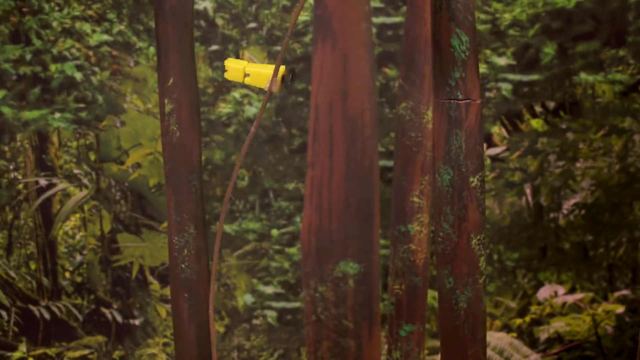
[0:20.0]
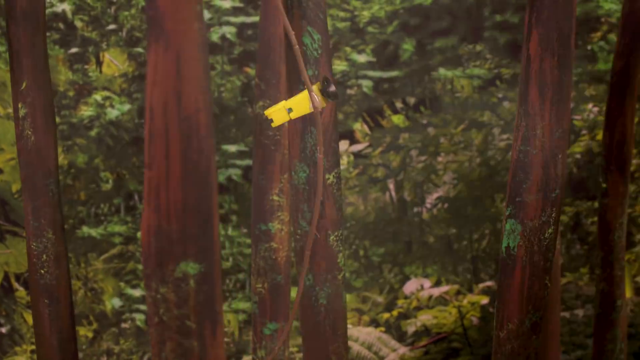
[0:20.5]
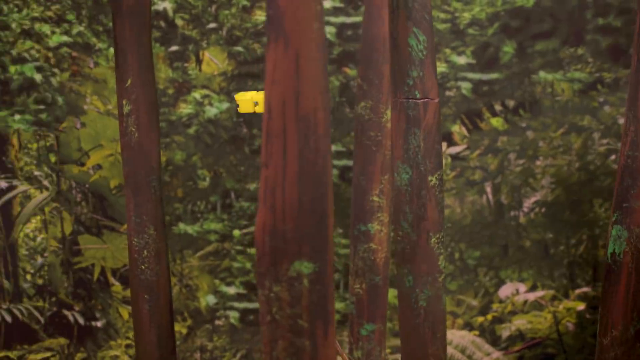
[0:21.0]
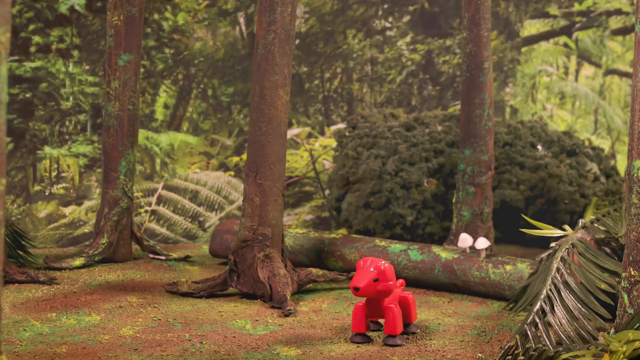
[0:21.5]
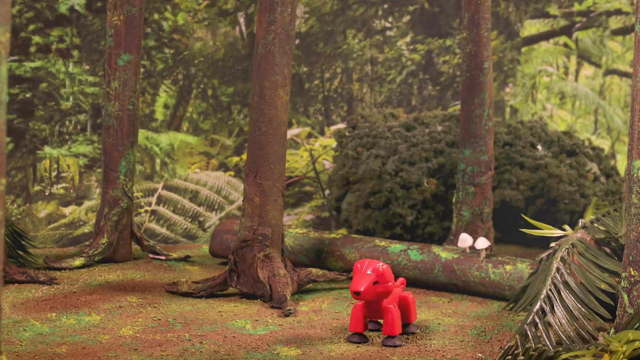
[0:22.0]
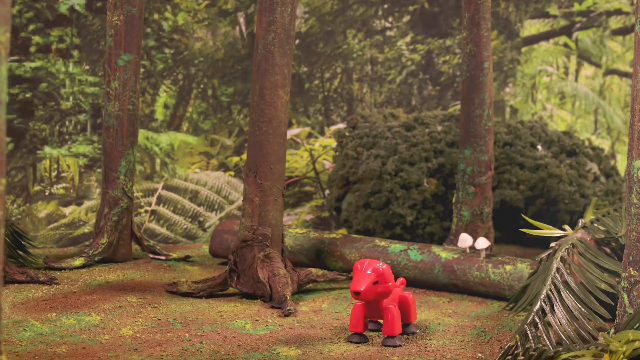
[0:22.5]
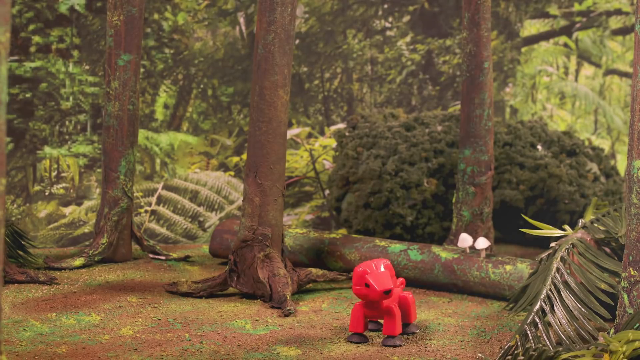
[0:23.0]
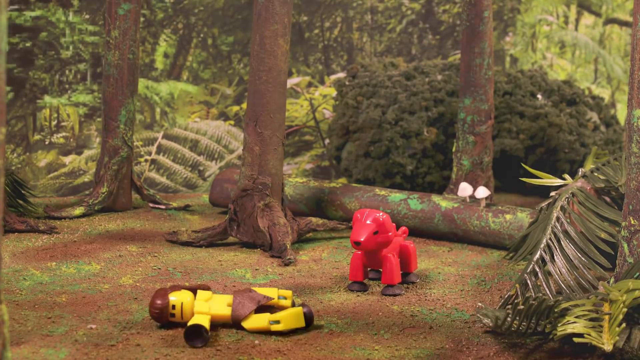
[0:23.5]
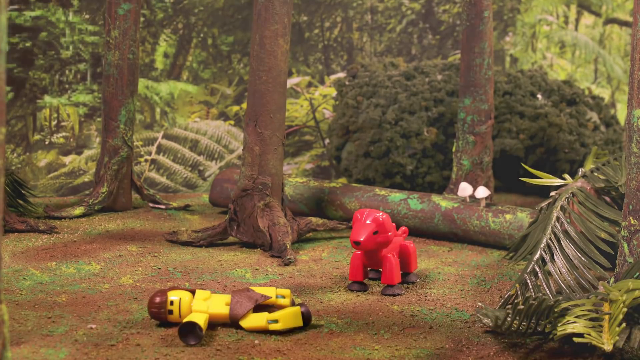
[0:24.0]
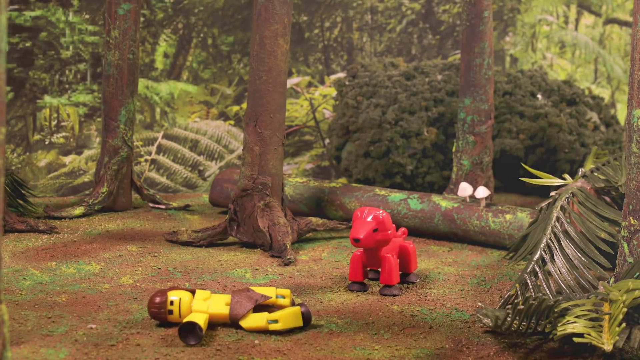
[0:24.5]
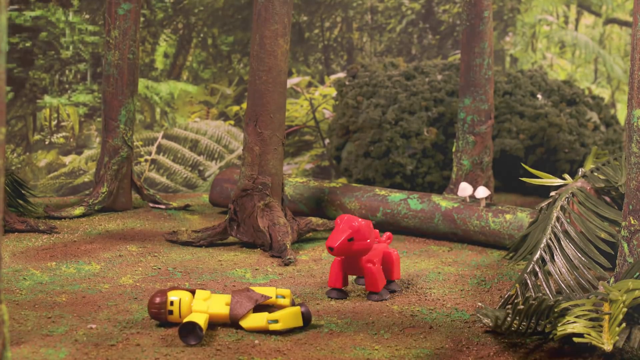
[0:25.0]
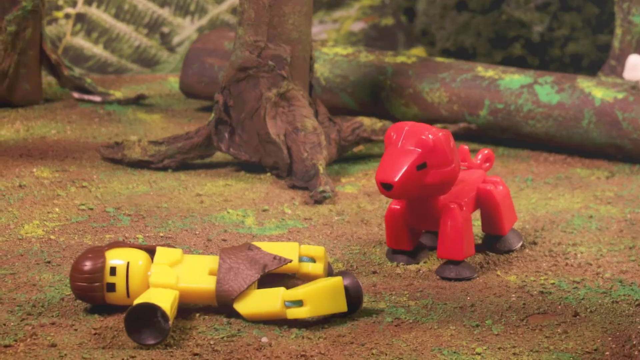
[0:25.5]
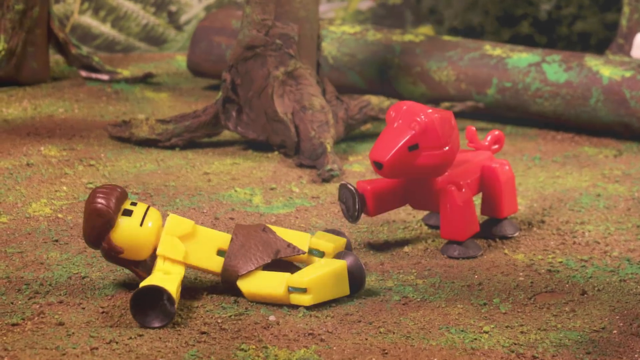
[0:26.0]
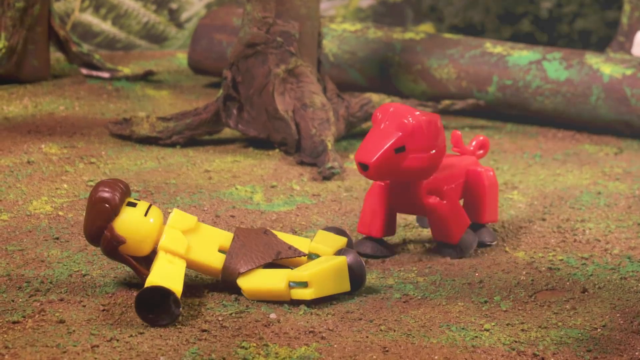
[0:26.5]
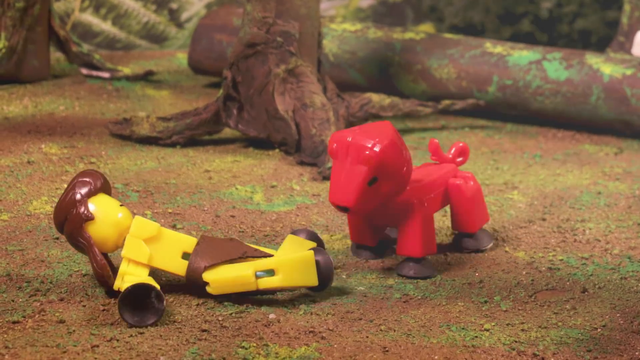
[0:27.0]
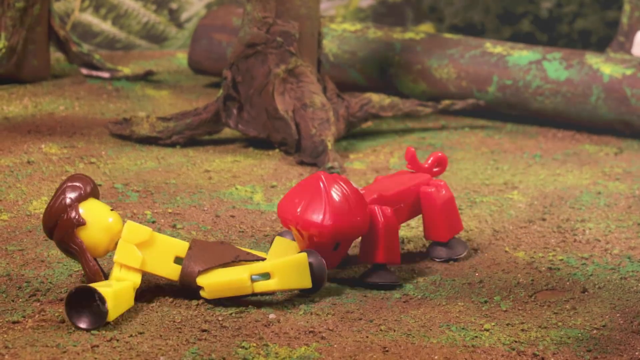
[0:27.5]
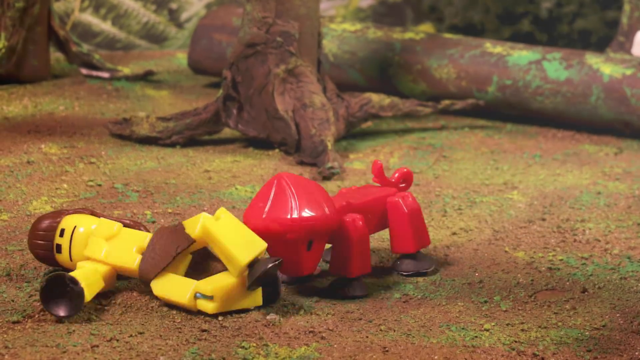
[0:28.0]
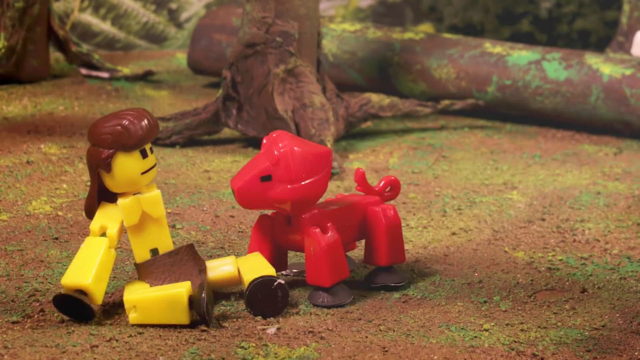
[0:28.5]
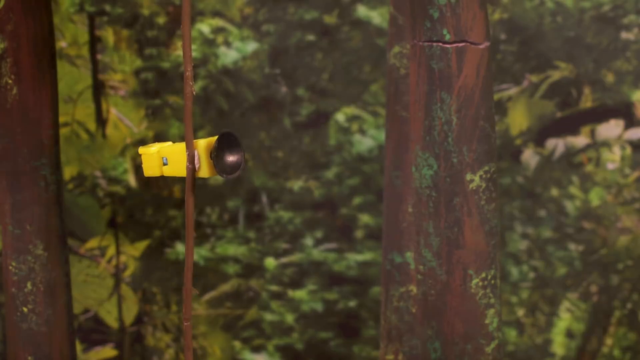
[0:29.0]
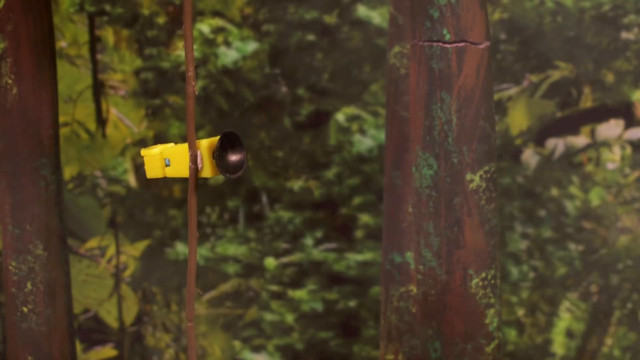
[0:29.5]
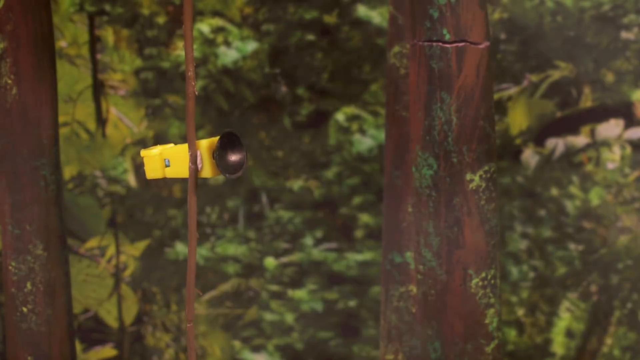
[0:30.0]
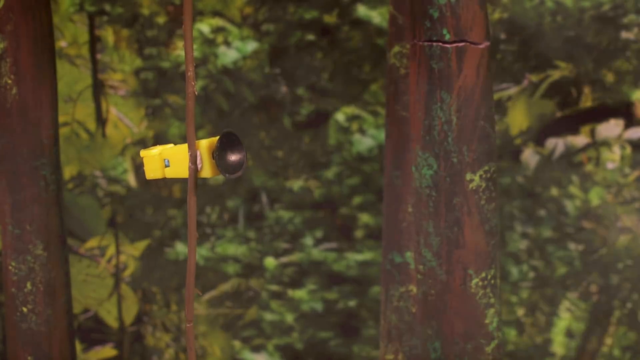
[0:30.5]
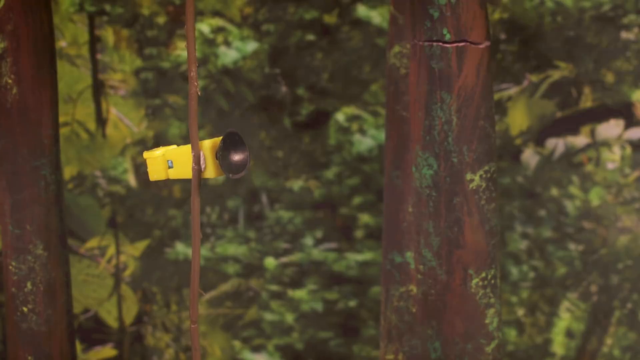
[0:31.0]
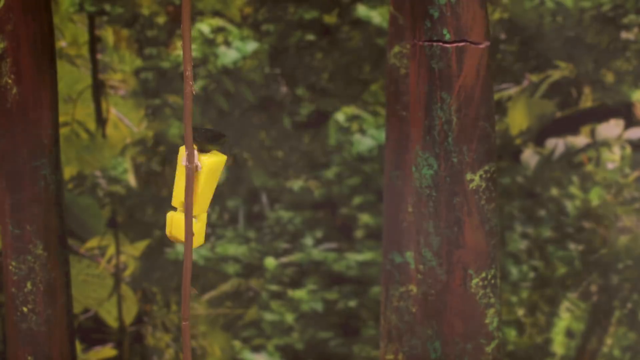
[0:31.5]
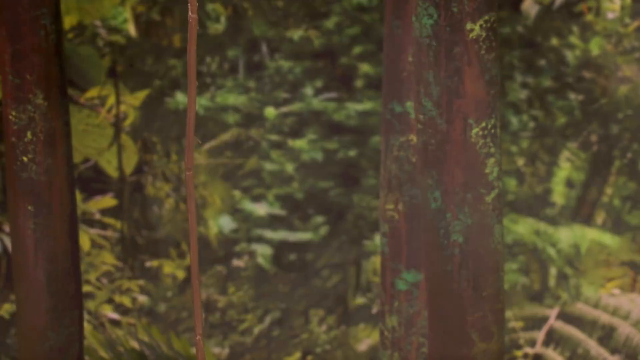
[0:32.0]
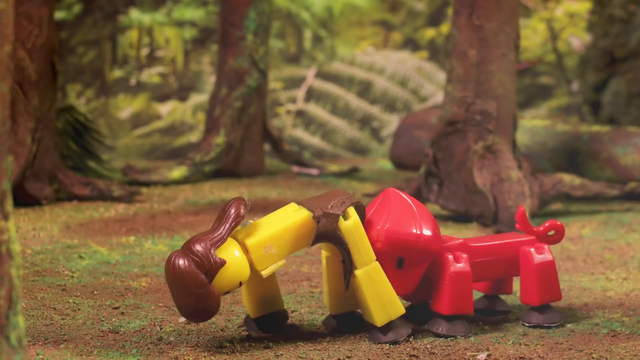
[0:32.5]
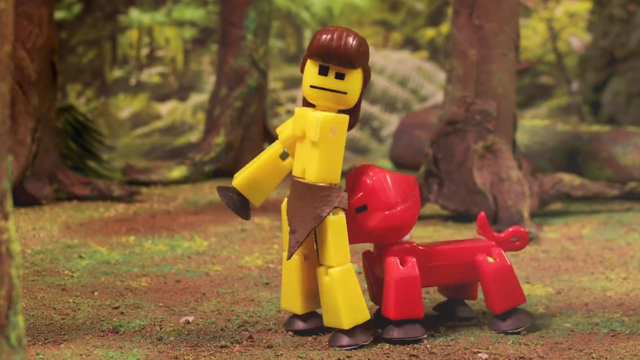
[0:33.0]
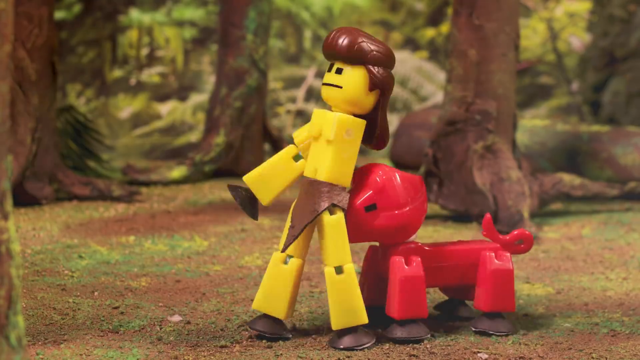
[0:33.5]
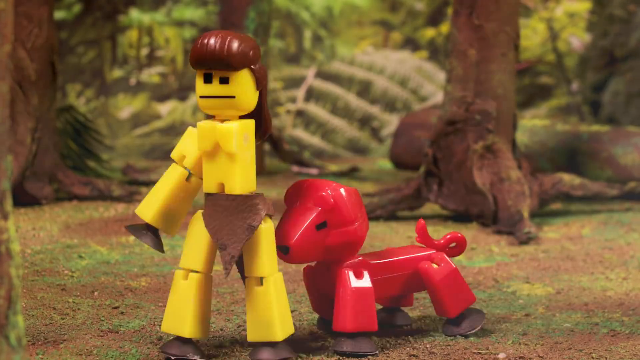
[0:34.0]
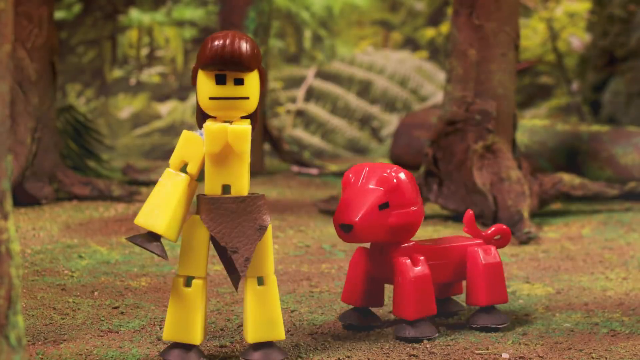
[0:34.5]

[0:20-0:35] In a forest in the woods, the view is kind of high up in the air, showing a limb hanging from a vine. The limb is yellow and its bottom, the "hand", is black, and the vine is kind of swinging back and forth. The scene switches to the forest floor, where a red figurine with the build of a dog or a wolf has black feet. Behind it is a fallen tree trunk with mushrooms on it. The creature is looking around when suddenly a yellow figurine, missing its arm and wearing a brown loincloth, falls from the sky. The creature approaches the person, who kind of backs up, and the creature helps the person up with its nose. The person stands up, and the limb on the vine is shown again before it falls.